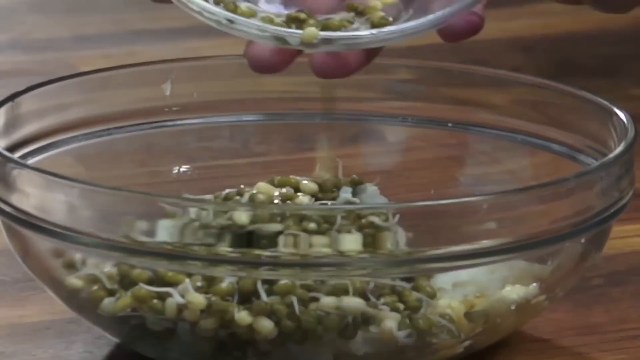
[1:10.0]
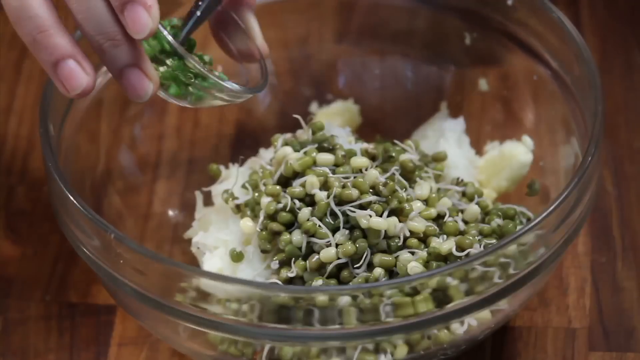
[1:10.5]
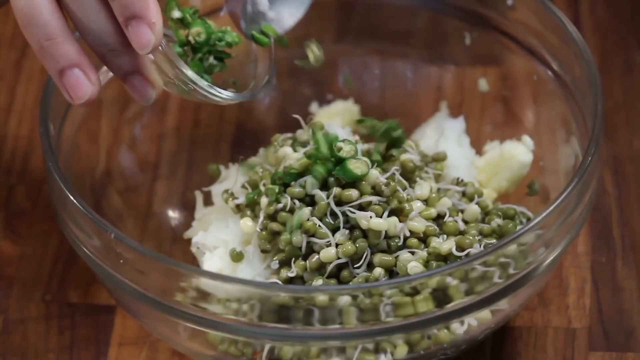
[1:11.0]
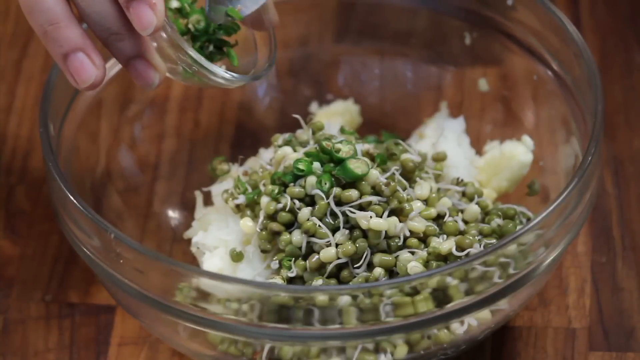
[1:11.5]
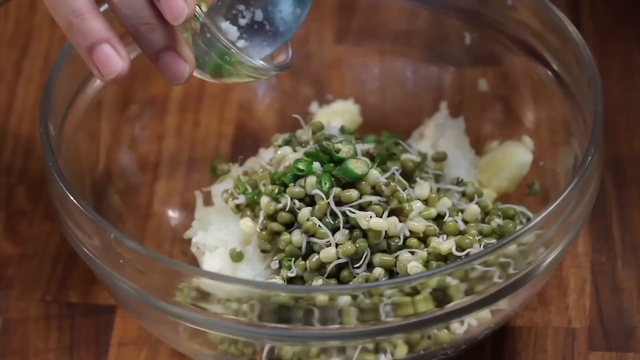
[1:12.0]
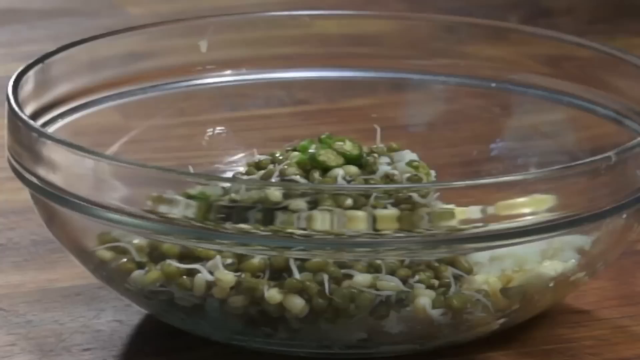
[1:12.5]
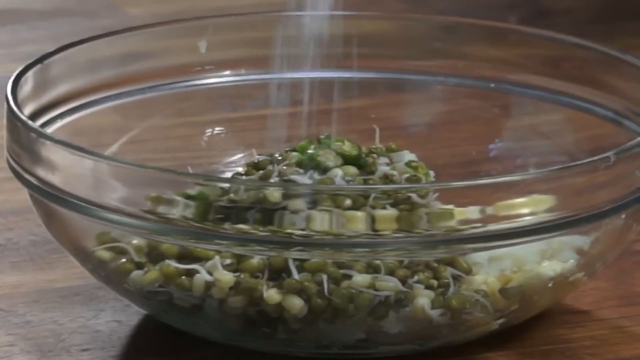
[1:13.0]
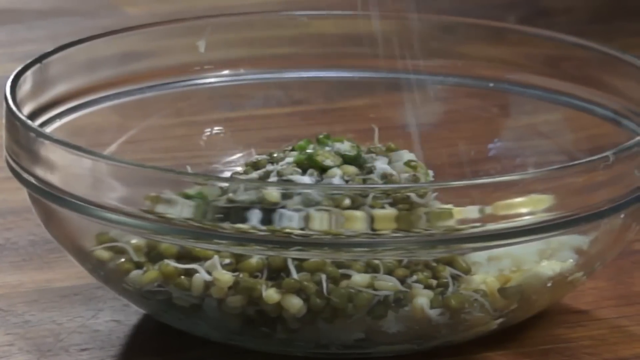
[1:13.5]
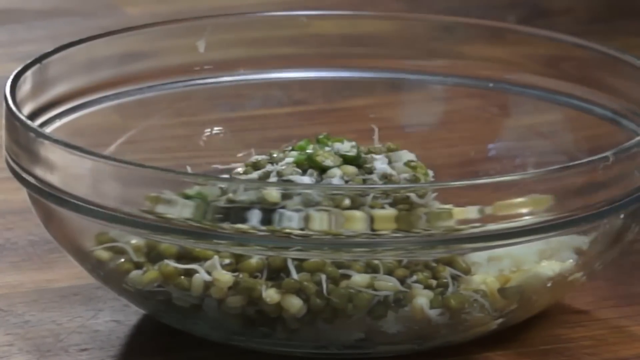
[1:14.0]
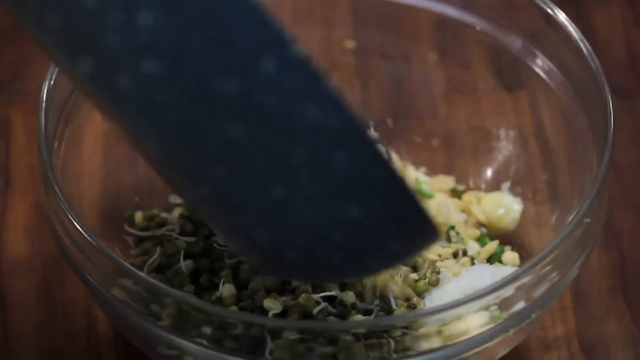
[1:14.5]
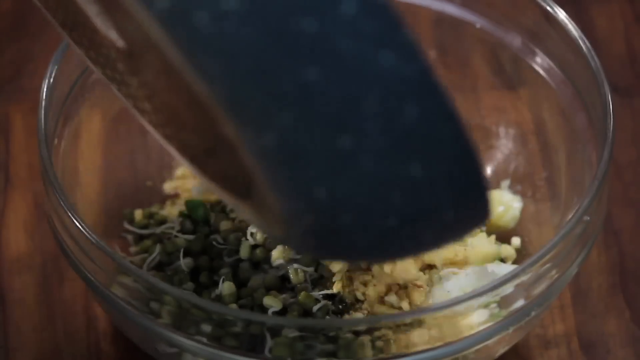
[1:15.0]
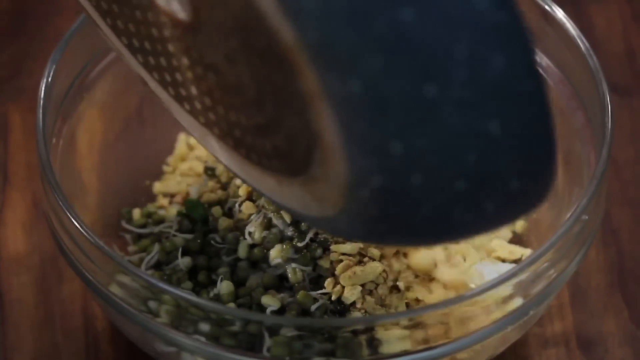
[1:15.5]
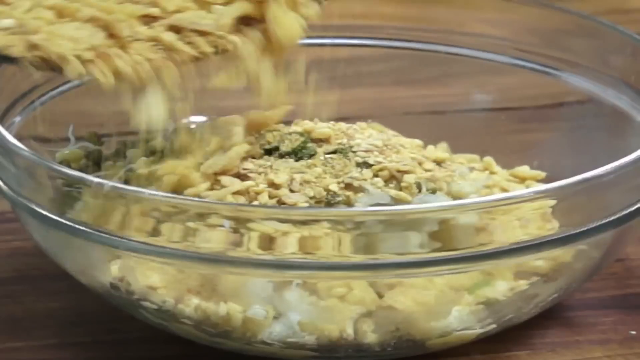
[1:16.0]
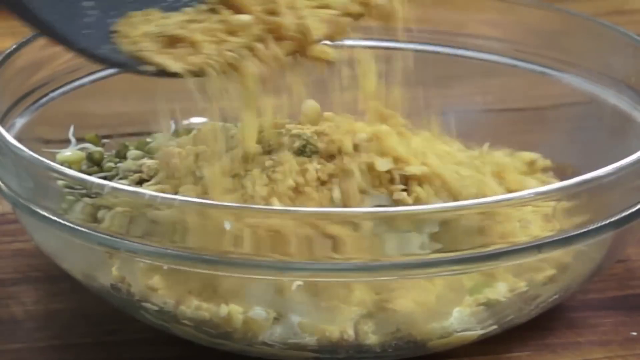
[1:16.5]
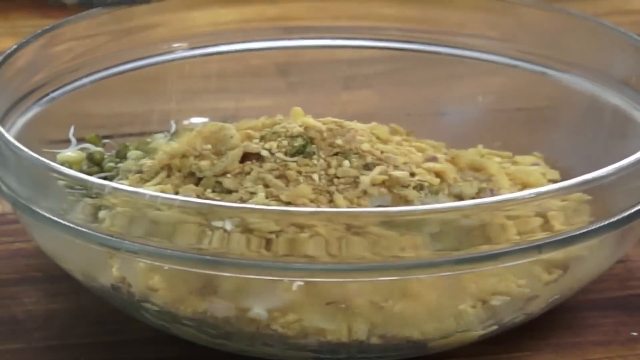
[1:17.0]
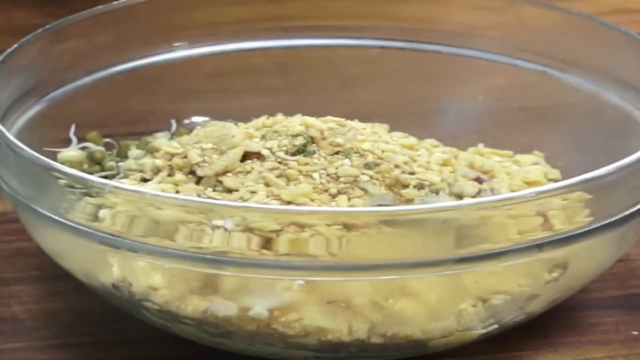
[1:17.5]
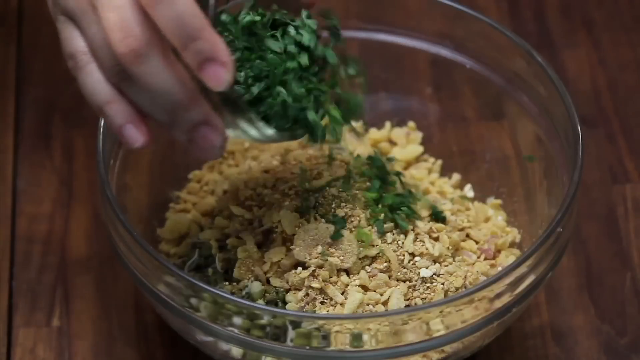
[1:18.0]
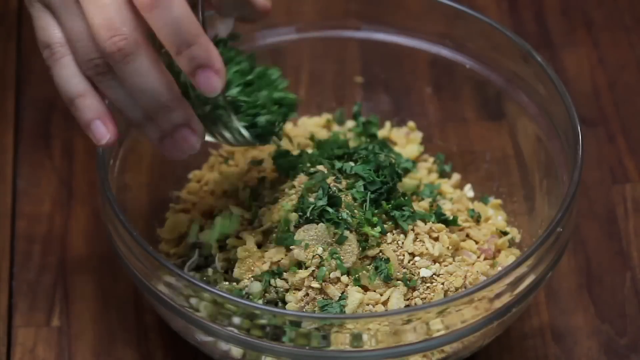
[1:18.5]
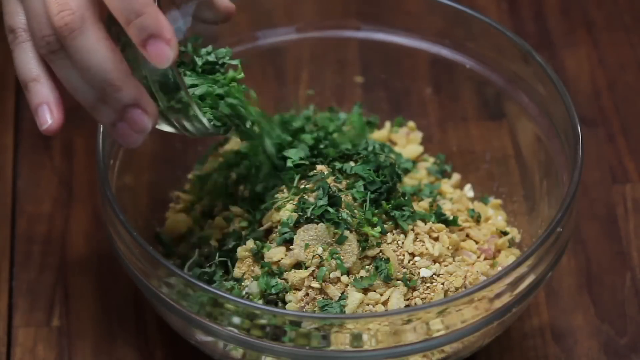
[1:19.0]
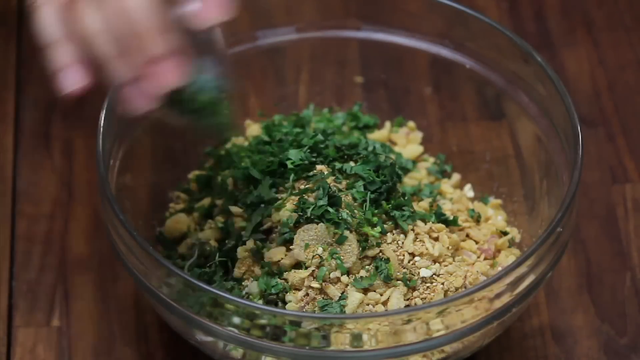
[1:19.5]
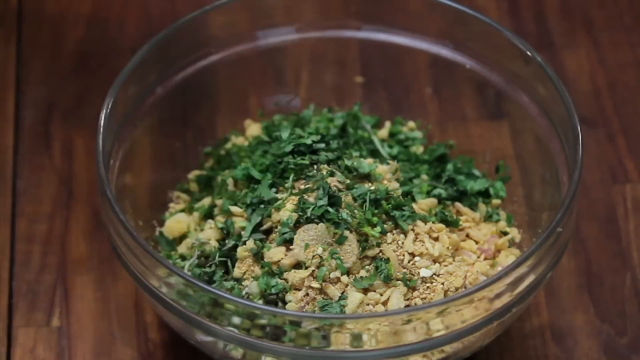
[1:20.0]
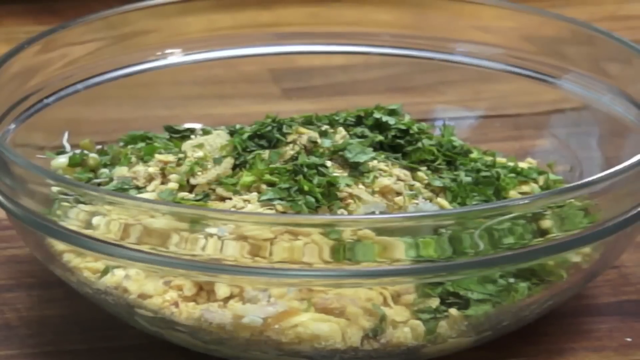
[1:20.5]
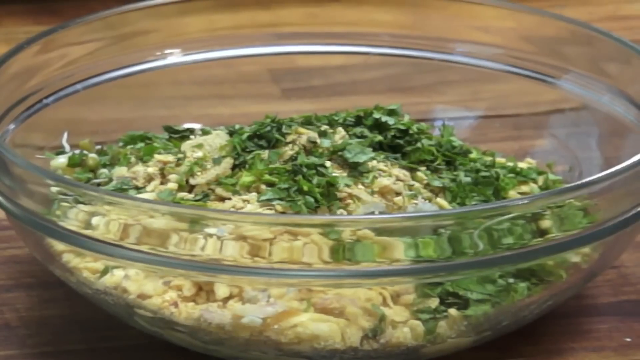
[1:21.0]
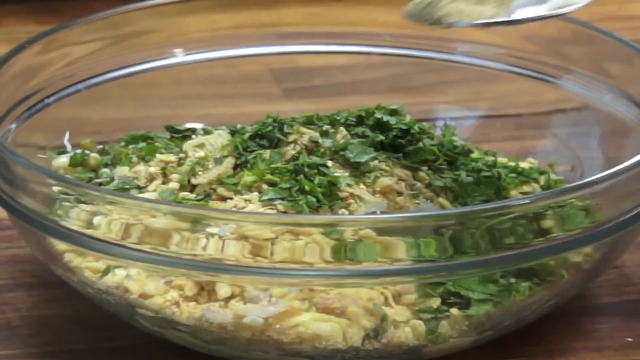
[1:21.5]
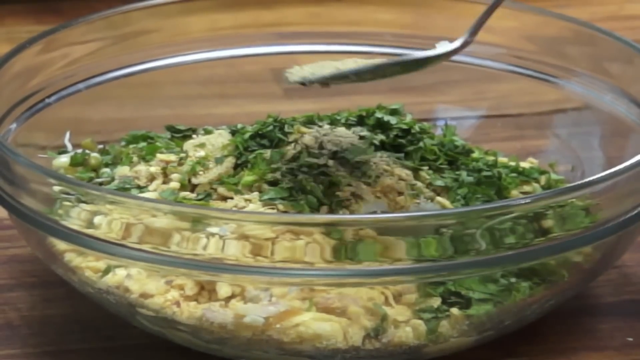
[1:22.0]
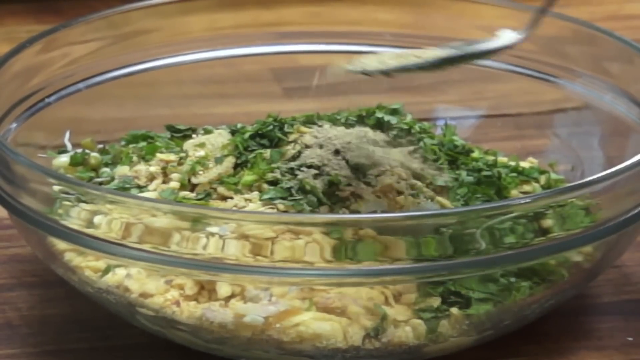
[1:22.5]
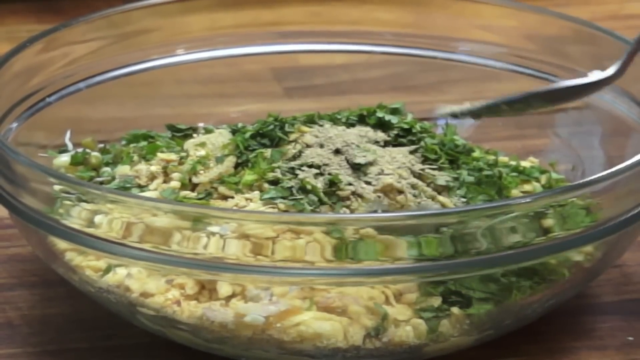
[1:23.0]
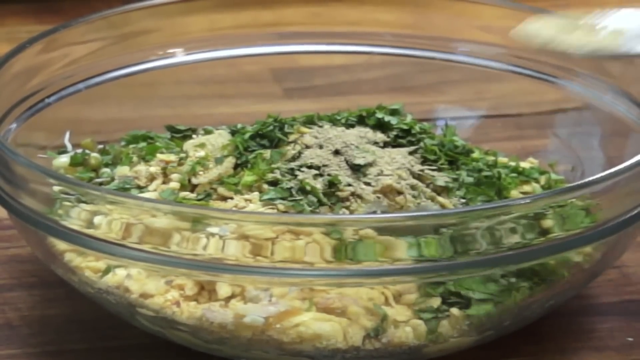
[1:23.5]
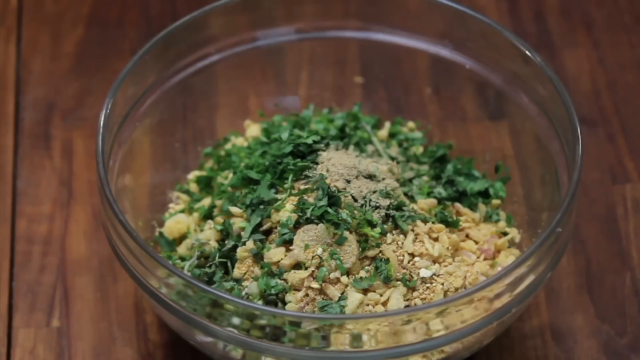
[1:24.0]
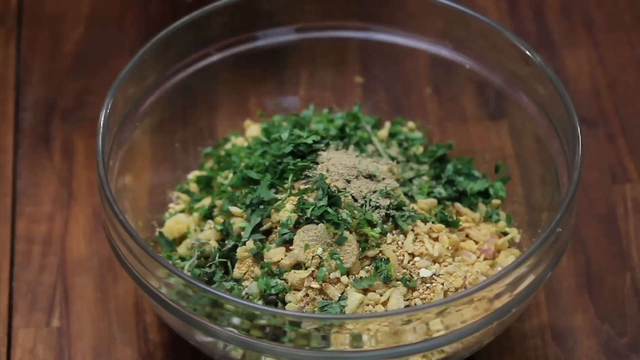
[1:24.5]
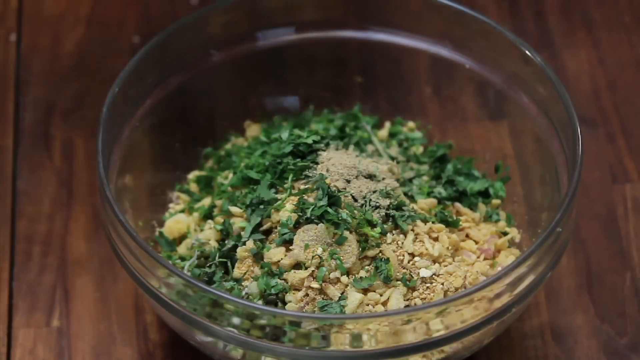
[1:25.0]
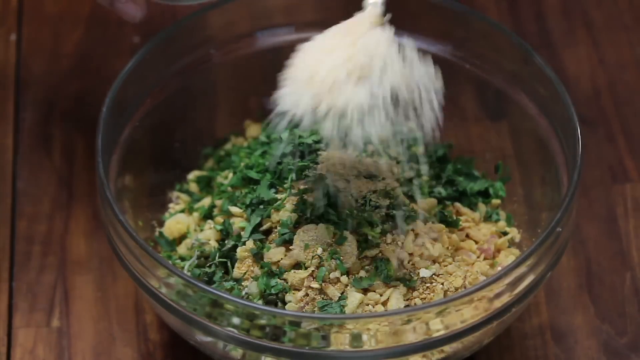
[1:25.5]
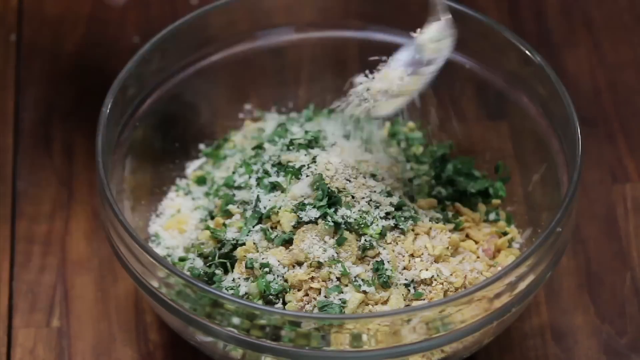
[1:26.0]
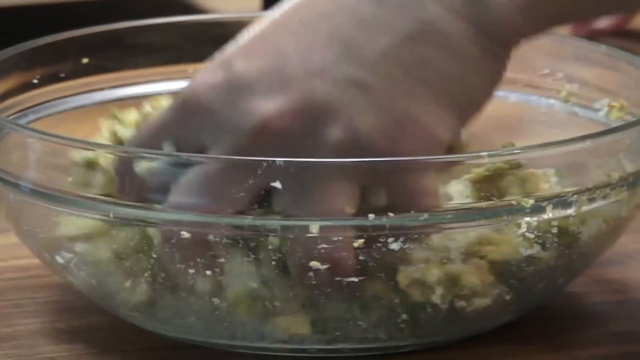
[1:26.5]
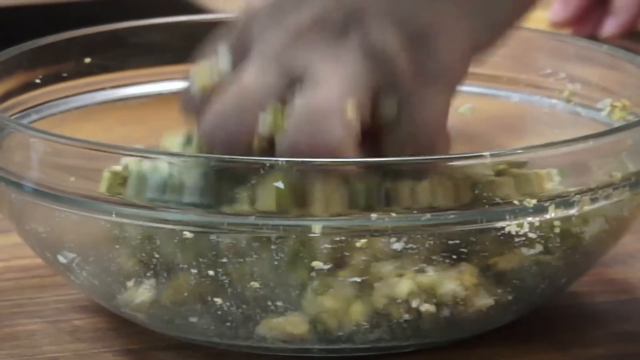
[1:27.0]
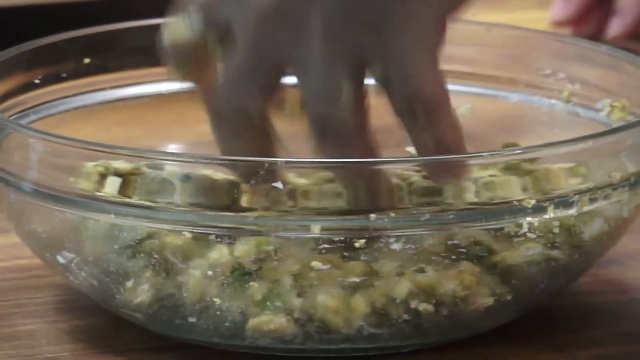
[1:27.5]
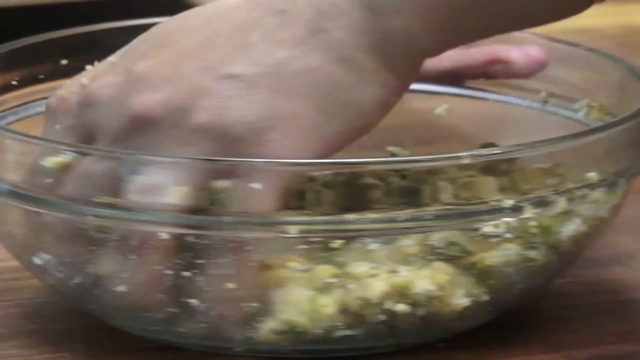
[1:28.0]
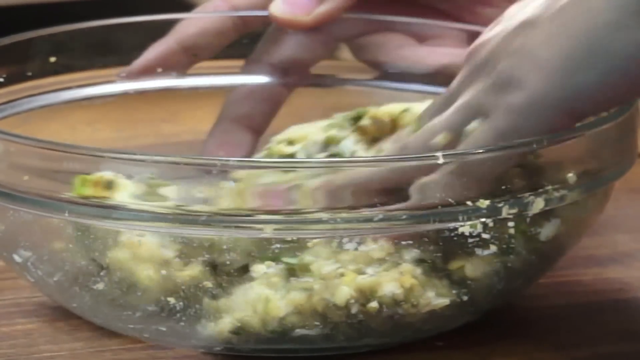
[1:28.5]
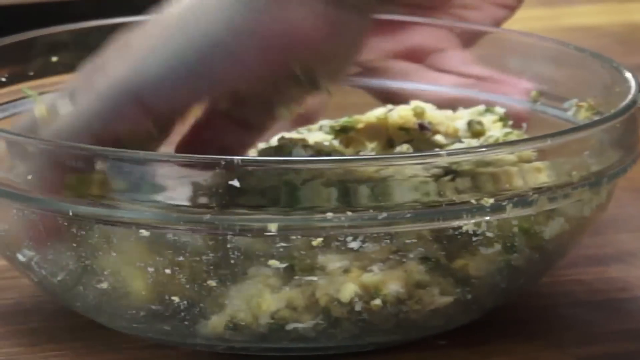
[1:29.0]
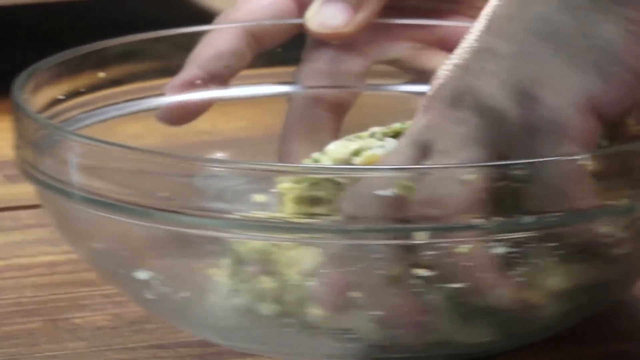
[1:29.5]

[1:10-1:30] With his right hand, the person appears to empty the sprouts into a bowl while using his left hand to spoon them out. He puts some salt over the top and adds the mixture from the pan along with what looks like parsley, mixing it all up in a big bowl. He spreads some more seasoning into it, then holds the bowl with his right hand and mixes with his left. Everything is mixed together in a round glass bowl. He kneads the mixture with his hands, kind of using his fists to push it down, and mixes it with his hands before rolling it into a ball; it looks like circles are being formed from the mixture, ready for frying.